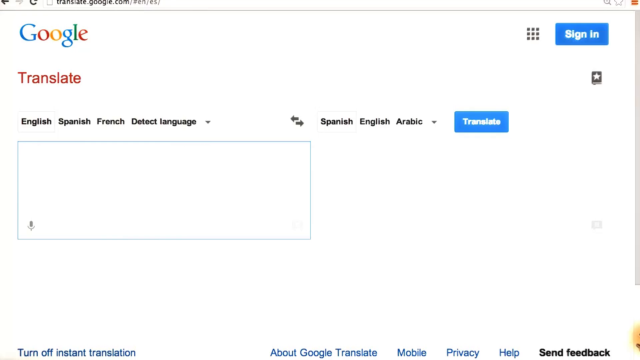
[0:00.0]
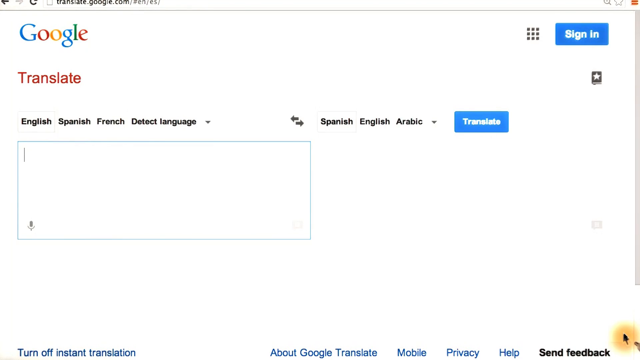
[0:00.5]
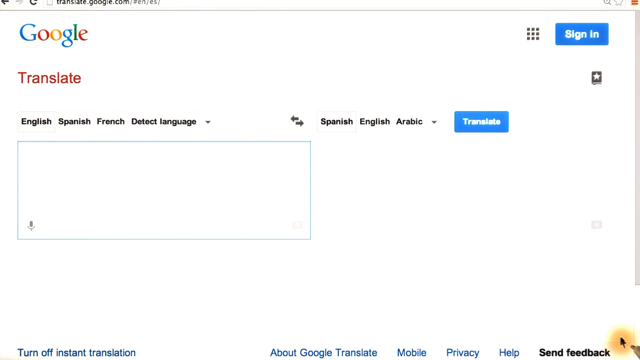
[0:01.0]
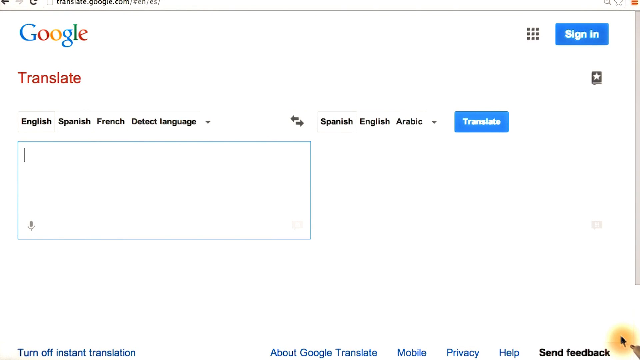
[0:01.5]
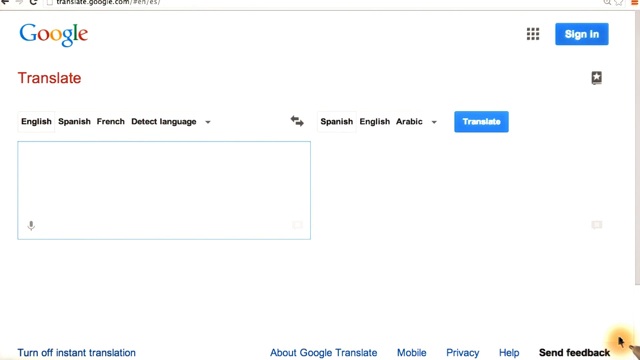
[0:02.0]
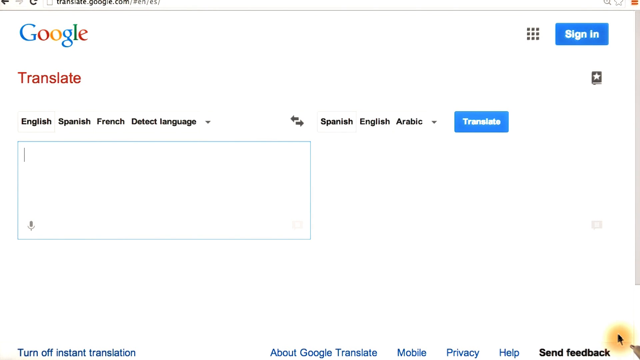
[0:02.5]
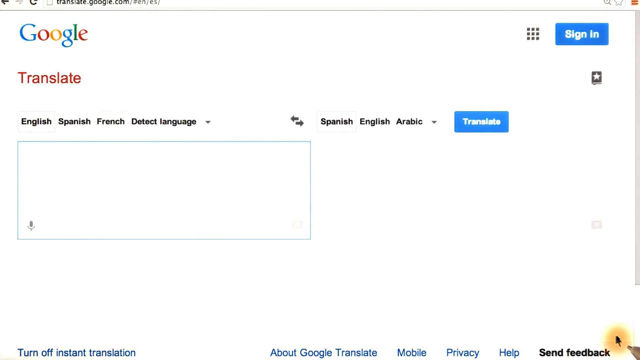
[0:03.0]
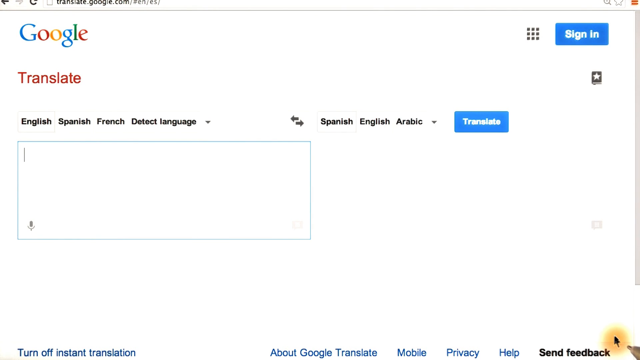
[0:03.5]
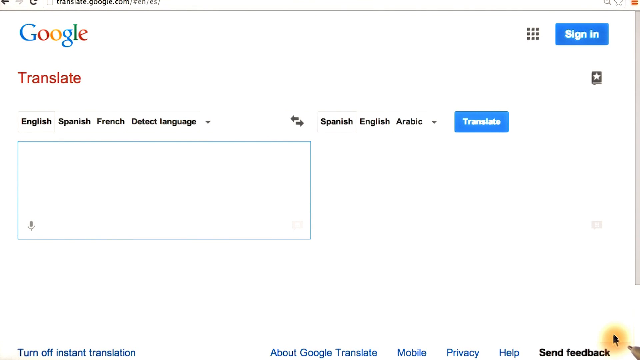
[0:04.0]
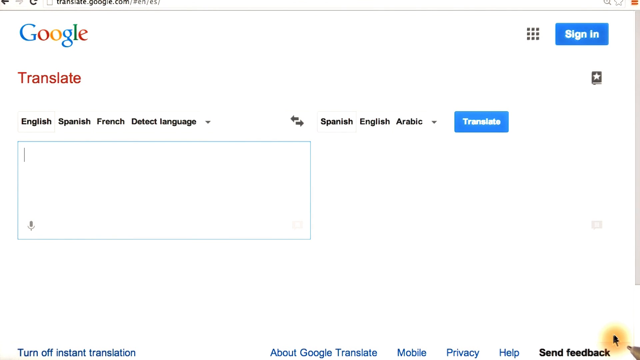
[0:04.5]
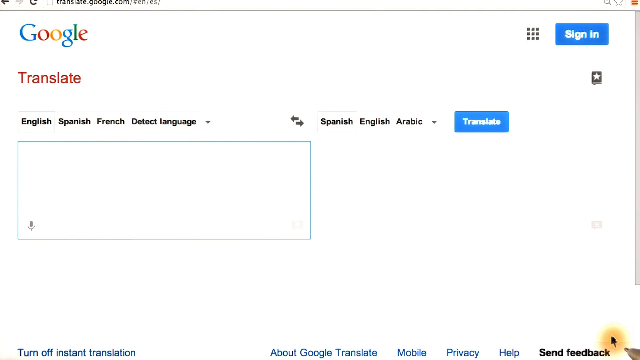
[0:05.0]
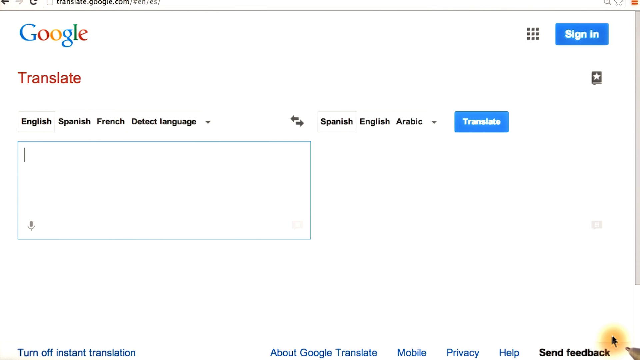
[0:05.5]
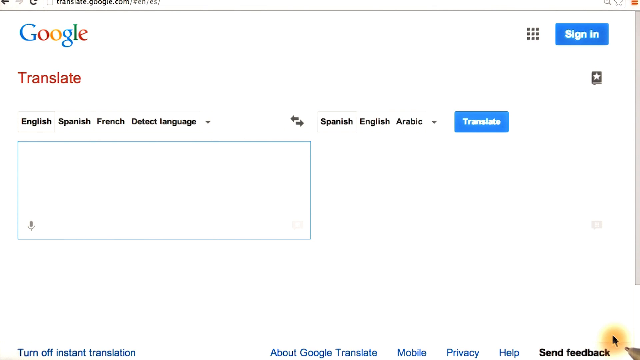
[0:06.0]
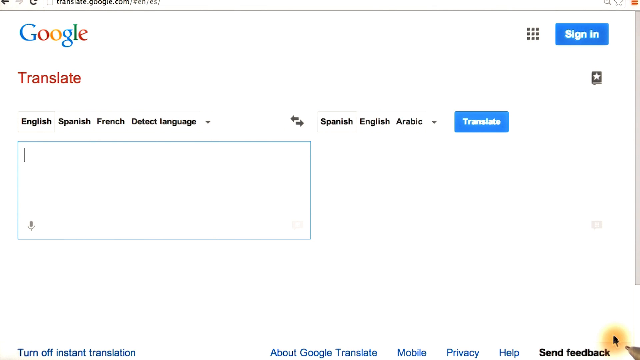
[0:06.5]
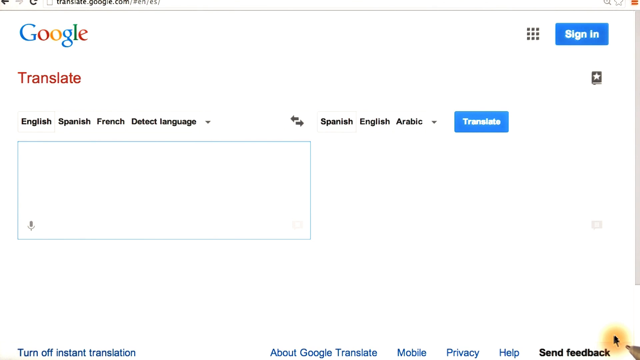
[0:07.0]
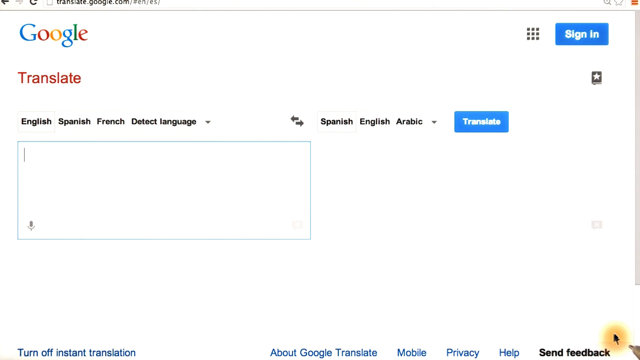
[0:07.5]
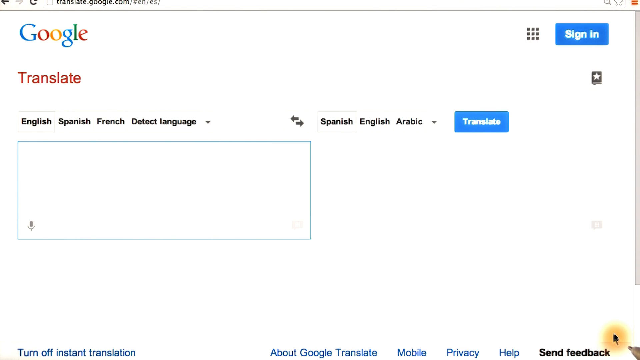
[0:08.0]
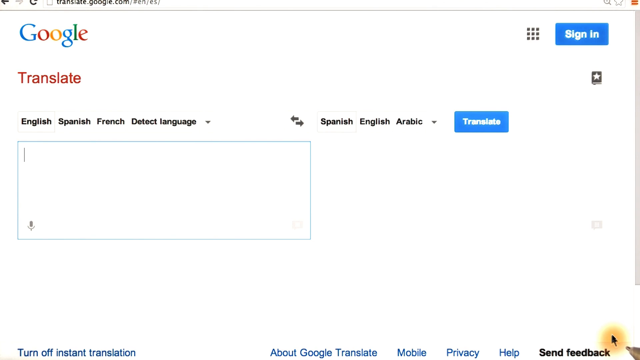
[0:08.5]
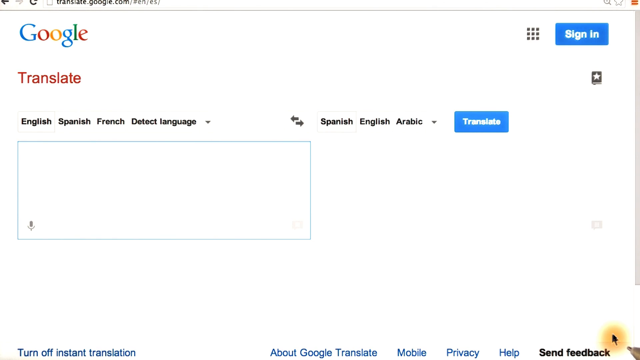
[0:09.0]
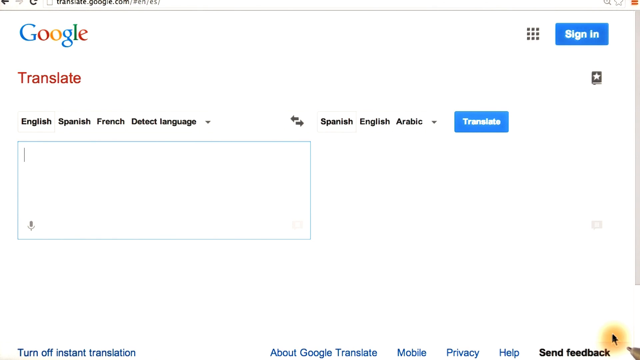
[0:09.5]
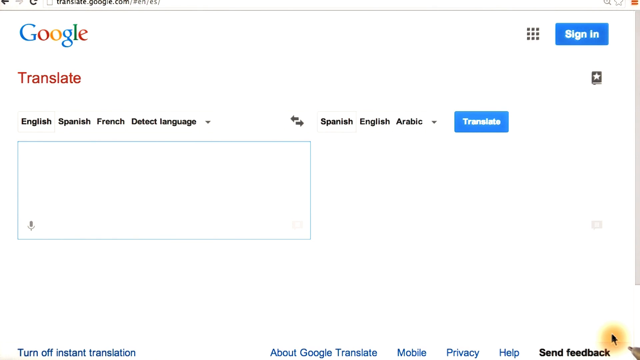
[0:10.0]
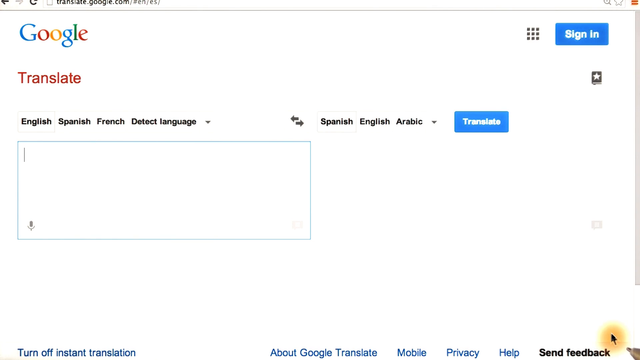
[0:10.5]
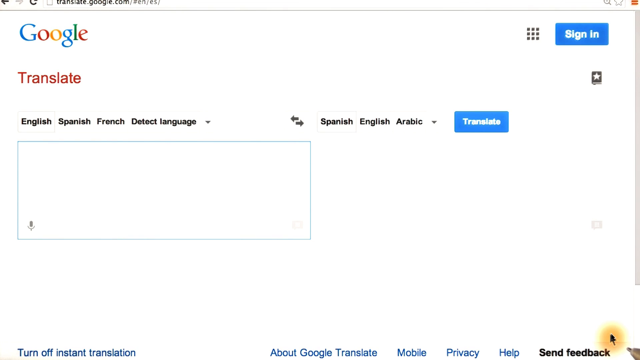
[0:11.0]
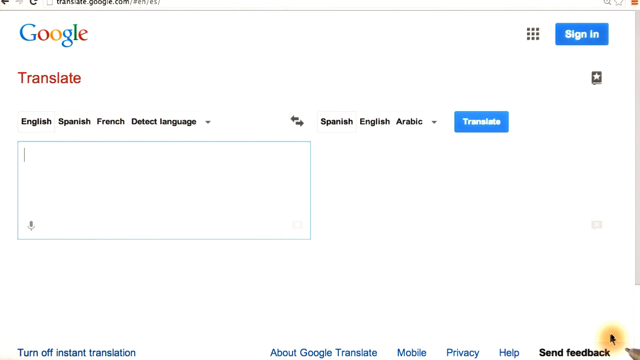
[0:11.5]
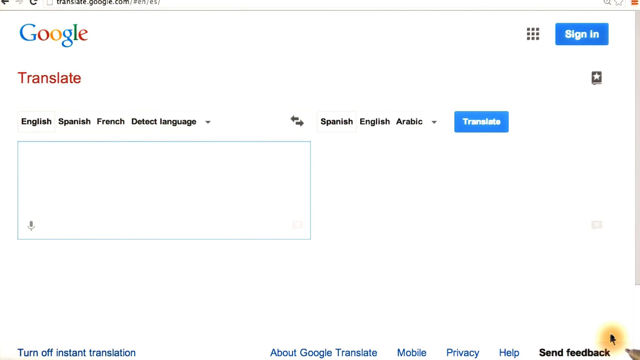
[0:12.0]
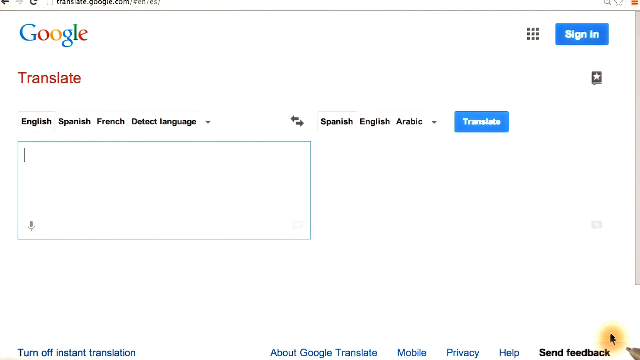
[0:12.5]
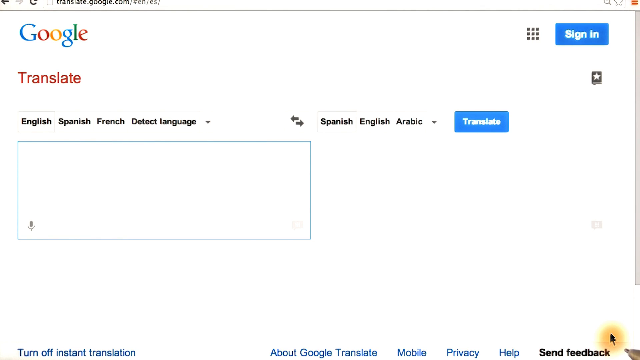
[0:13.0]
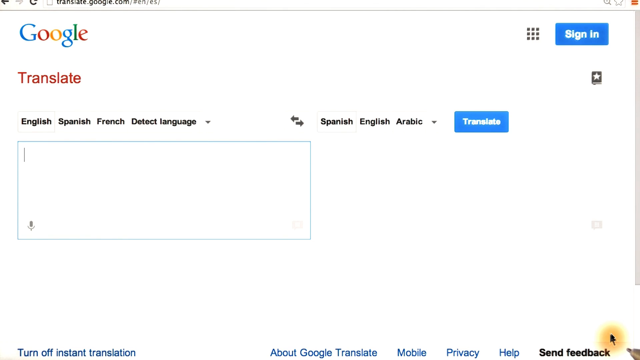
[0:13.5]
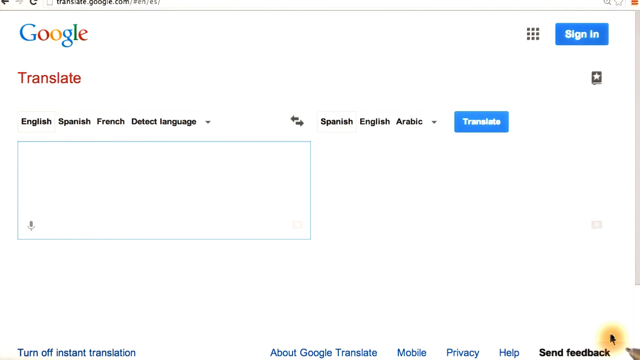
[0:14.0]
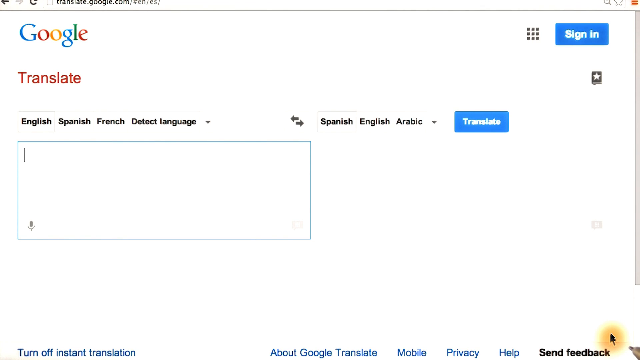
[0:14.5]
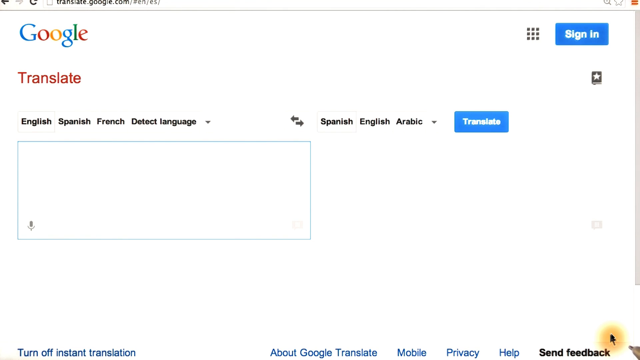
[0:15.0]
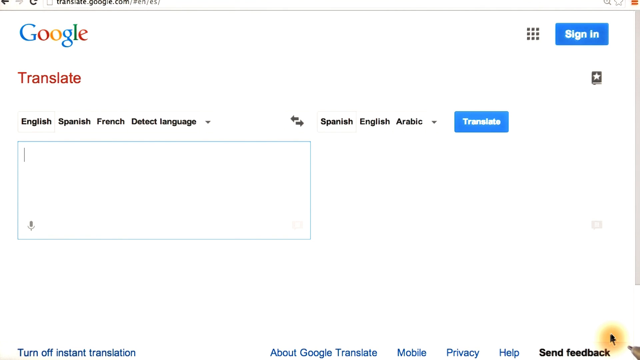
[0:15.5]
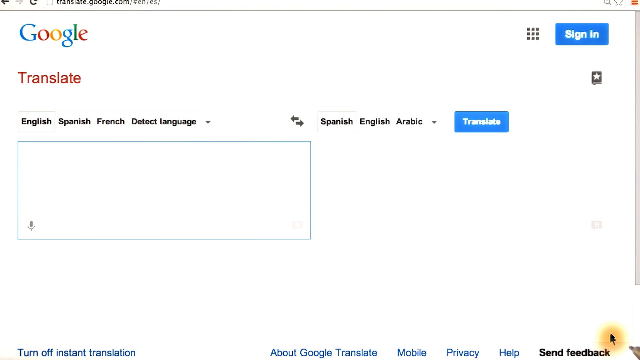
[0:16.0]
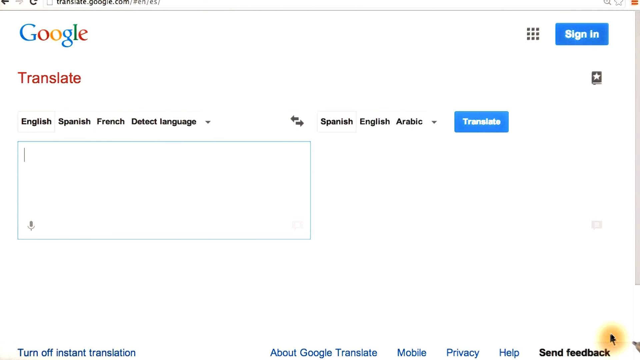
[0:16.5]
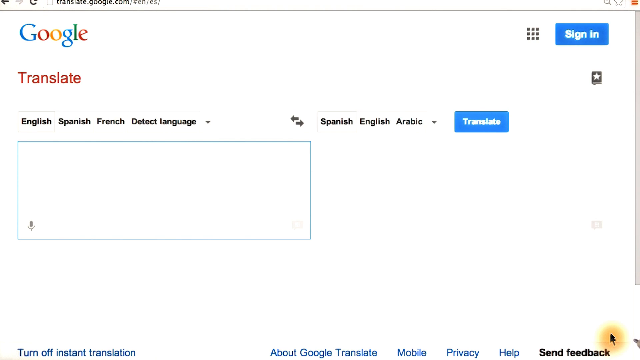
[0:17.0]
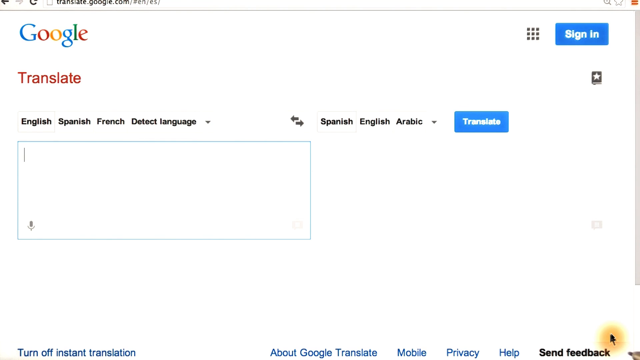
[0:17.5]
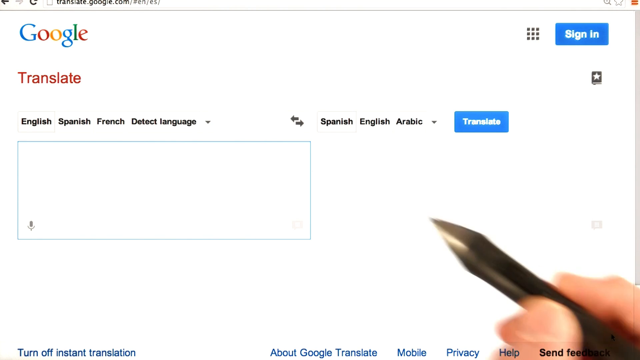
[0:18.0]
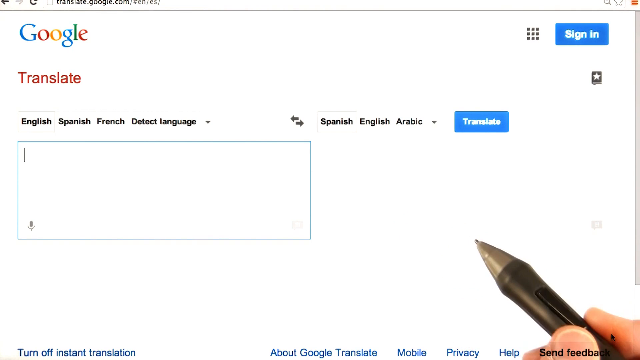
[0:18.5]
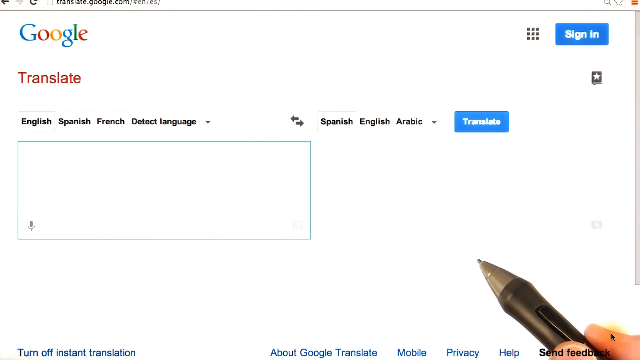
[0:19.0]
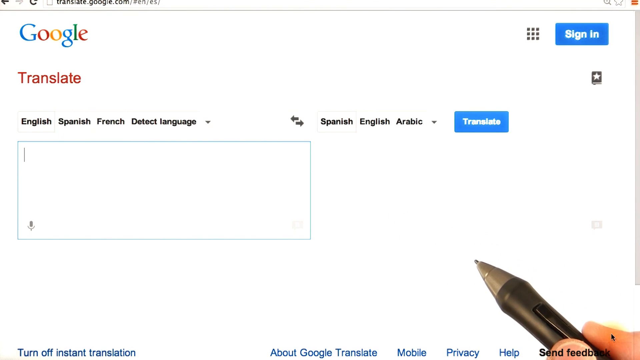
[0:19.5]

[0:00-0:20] A screencast focuses on a web browser page from translate.google.com showing the standard Google Translate page. There is a Google logo at the top left with the text "Translate" in red font below it. Below that is a selection of language choices including English, Spanish and French, plus an option to detect language, and below that is a highlighted blue box. To the right, text shows the possible destination languages, including Spanish, English and Arabic, along with a blue button with white text that says "Translate". A blinking cursor is in the left-hand translation panel, but no text has been typed. A realistic pen moves across the bottom right-hand side of the screen, and briefly a right hand is visible holding it; it appears to be gesturing to the white space on the screen. There is no other movement on the screen.